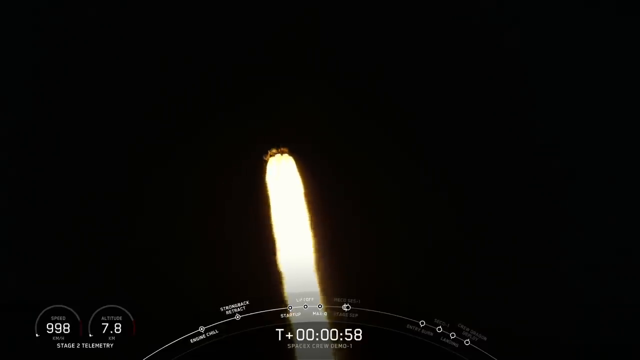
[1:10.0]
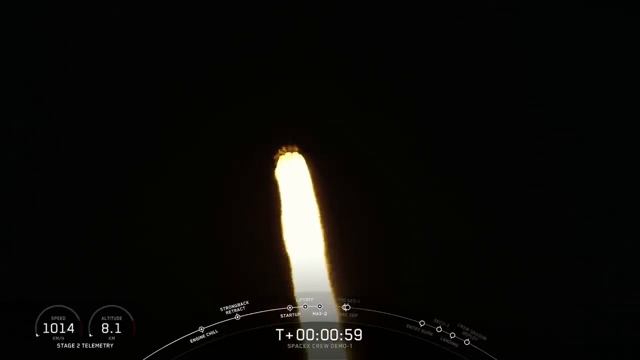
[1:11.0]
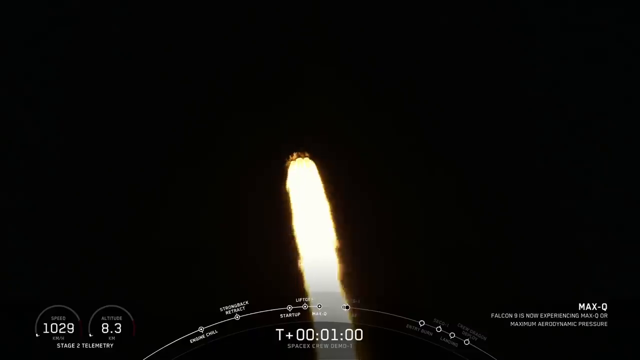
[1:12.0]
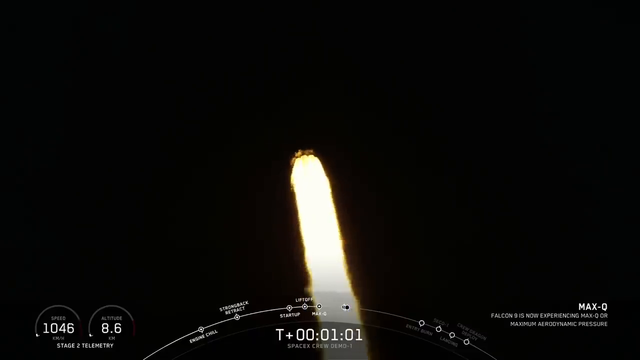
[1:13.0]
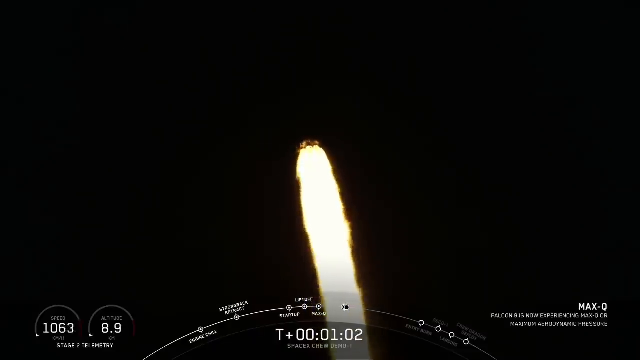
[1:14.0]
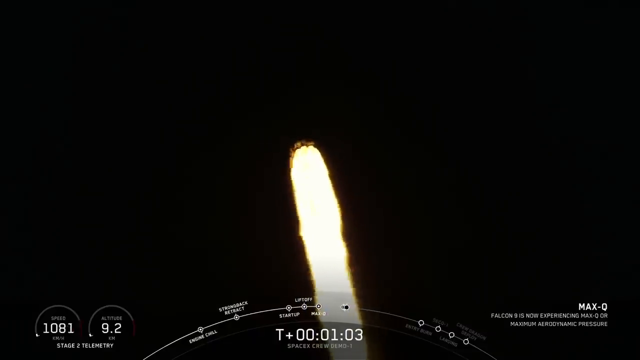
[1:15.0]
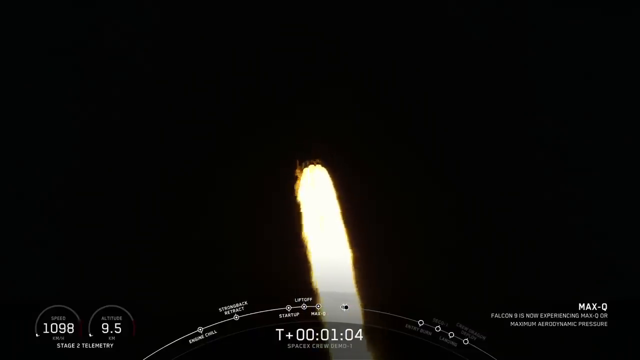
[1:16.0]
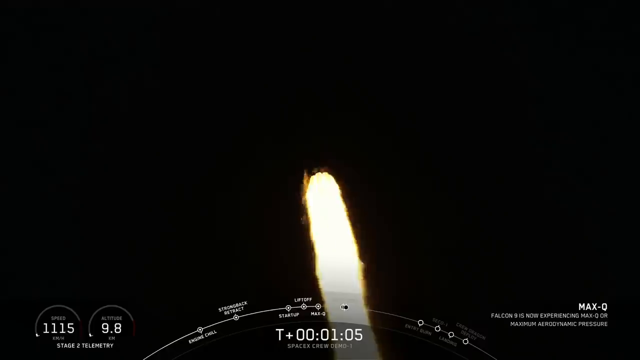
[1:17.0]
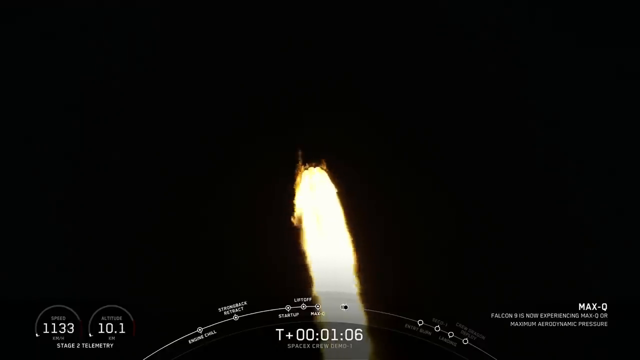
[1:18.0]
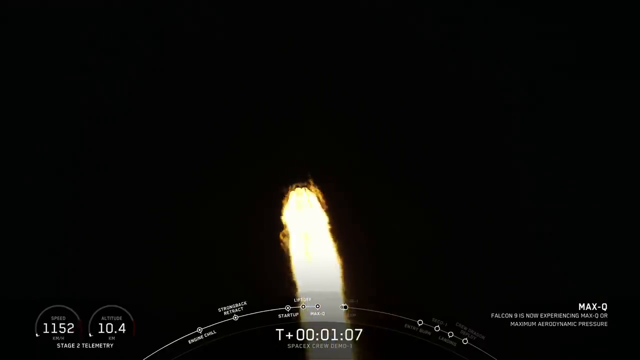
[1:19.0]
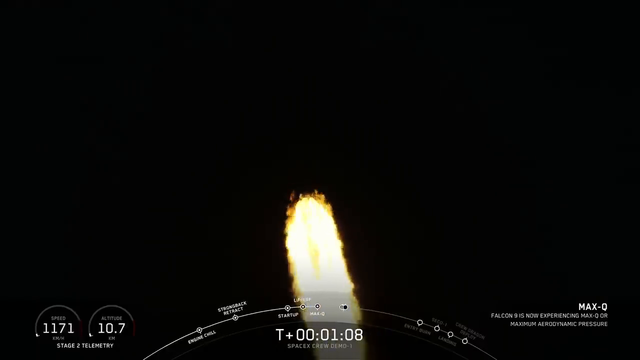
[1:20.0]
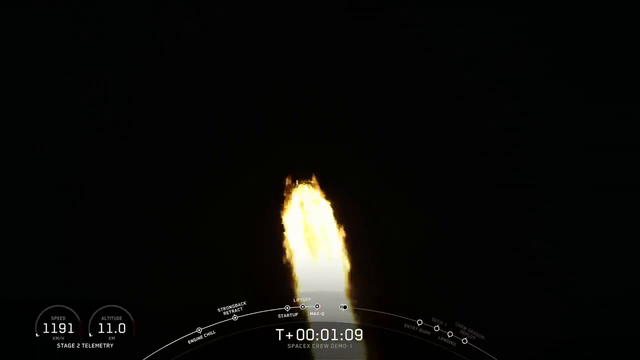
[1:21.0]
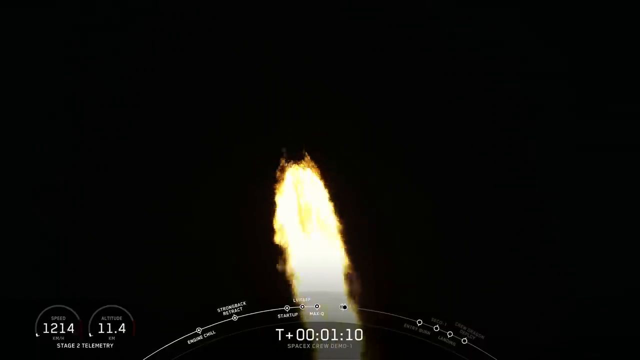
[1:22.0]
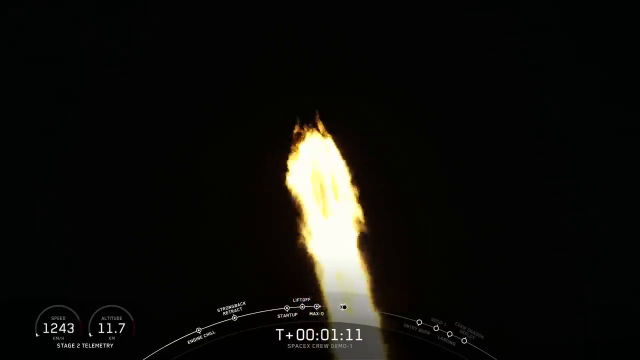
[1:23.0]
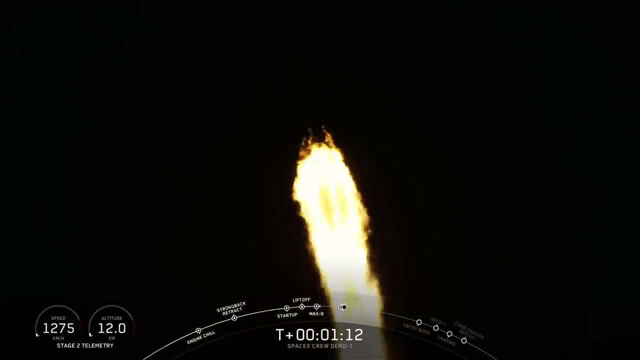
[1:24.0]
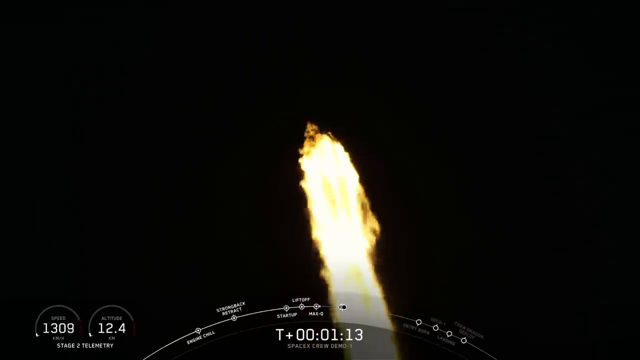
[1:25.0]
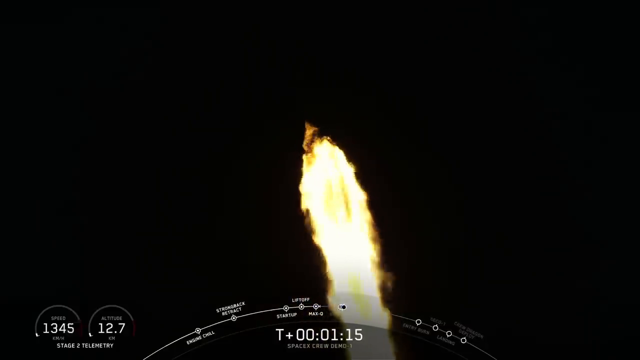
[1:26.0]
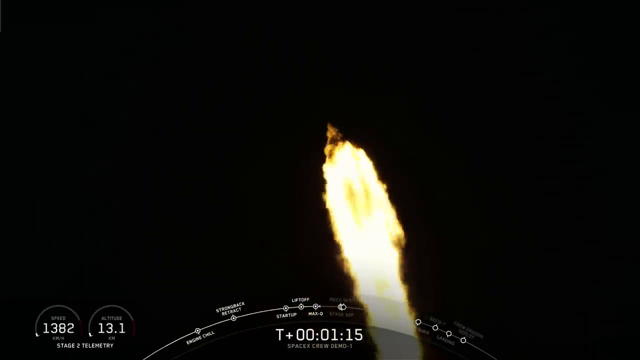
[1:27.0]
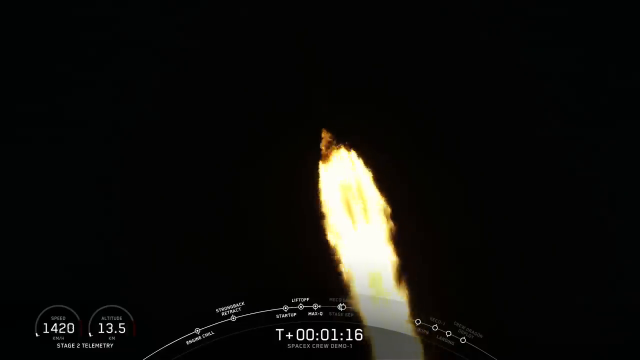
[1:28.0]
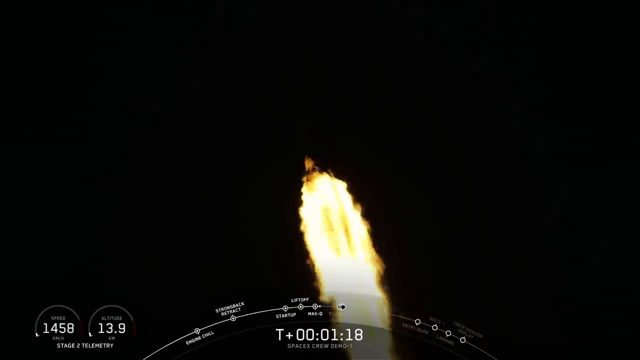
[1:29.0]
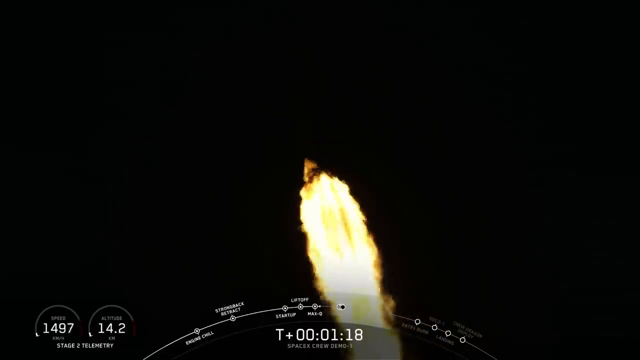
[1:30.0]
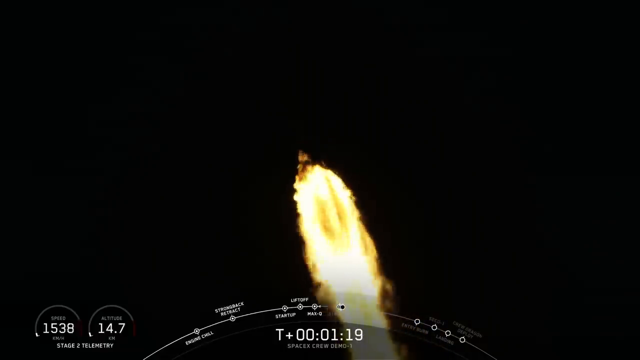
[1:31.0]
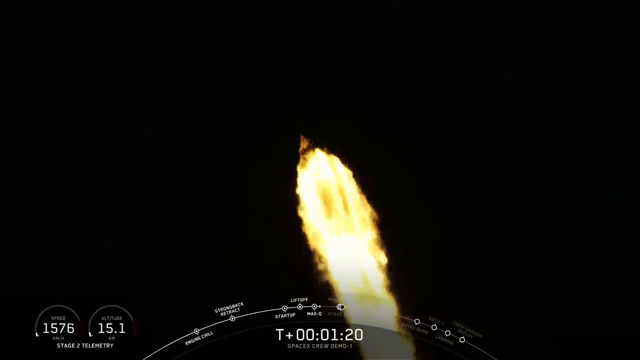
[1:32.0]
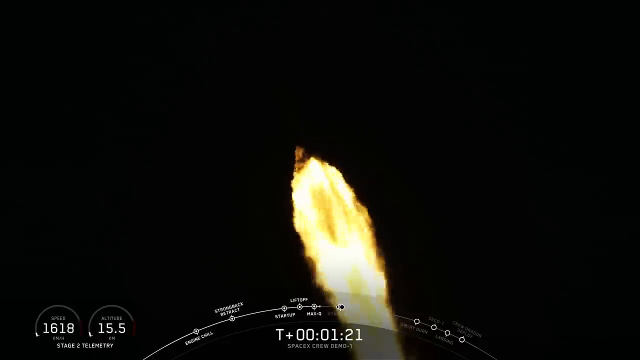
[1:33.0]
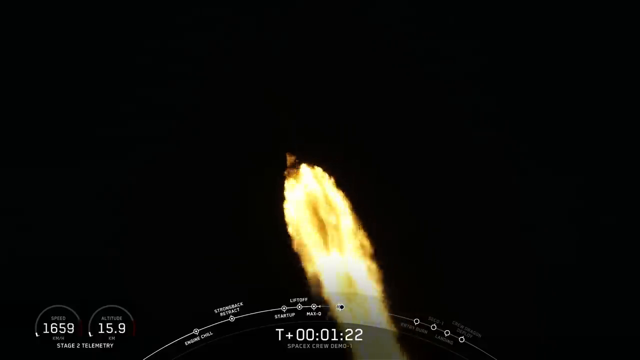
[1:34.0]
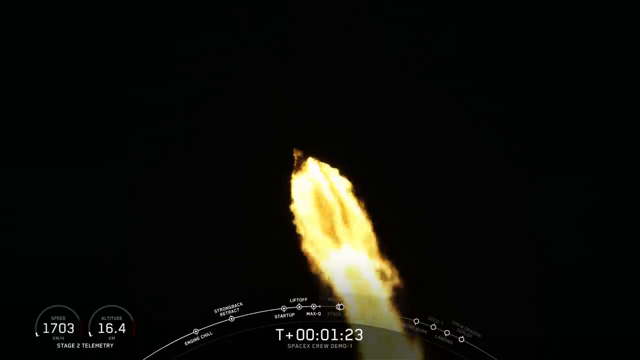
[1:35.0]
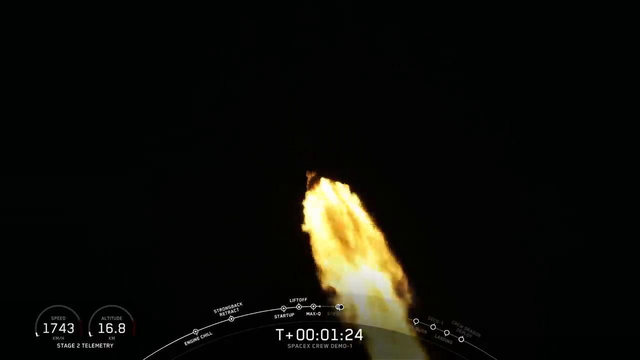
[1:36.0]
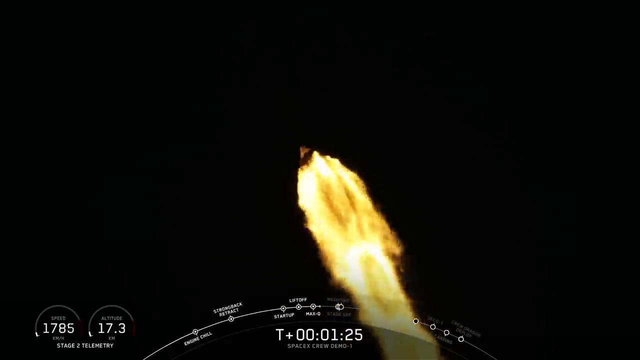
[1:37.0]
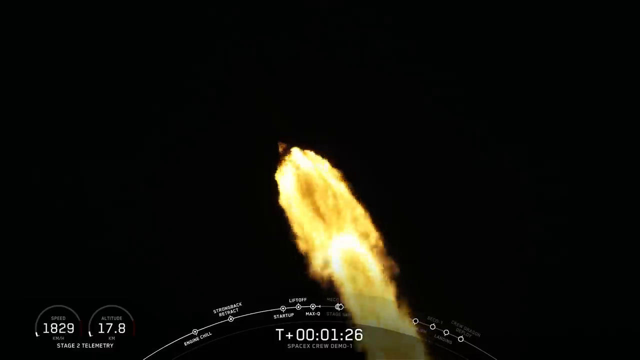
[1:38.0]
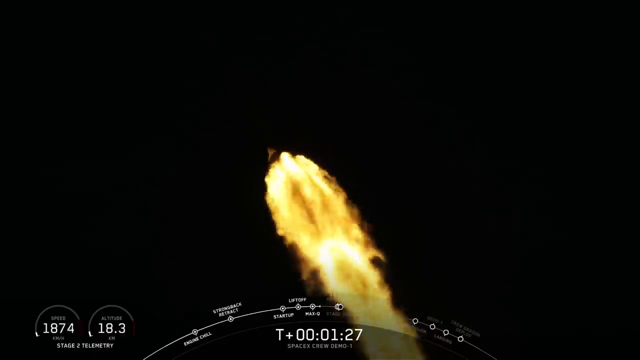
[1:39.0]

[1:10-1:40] The zoomed-in view from Earth shows the rocket at roughly an 80-degree angle, accelerating up to the left. Little of the rocket is visible because it is immersed in darkness; most of the screen is completely black except for the fire continuing to emit from the bottom of the rocket. The gauges climb past 1,300 kilometers an hour and 13 kilometers in altitude. As the timer reaches 1 minute and 15 seconds, the graphics remain visible at the bottom of the screen, with the two gauges on the left and the arced line with launch milestones plotted along it. Over time, less and less of the rocket itself is visible, leaving mainly the fiery glow of the fire emitted from the rocket boosters. The base of the rocket is roughly in the middle of the screen, with the fiery tail taking up the bottom middle.